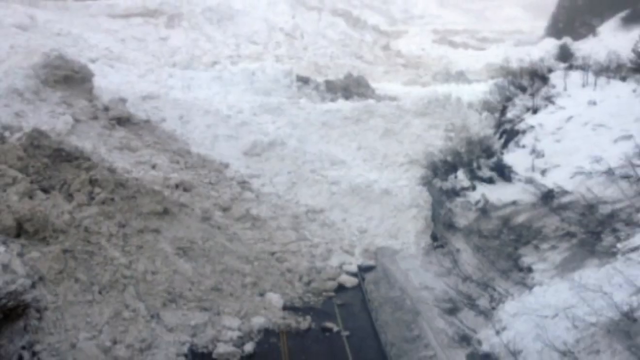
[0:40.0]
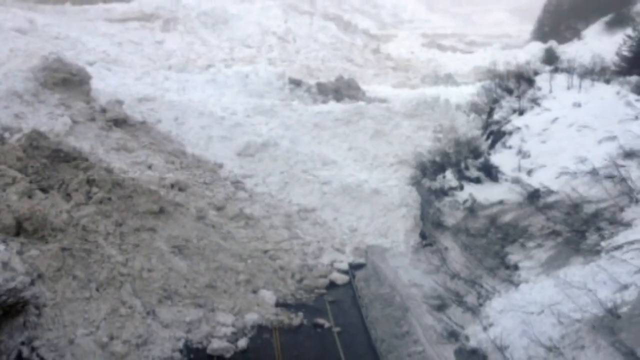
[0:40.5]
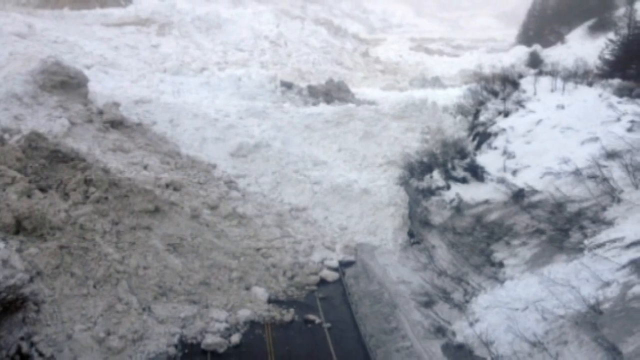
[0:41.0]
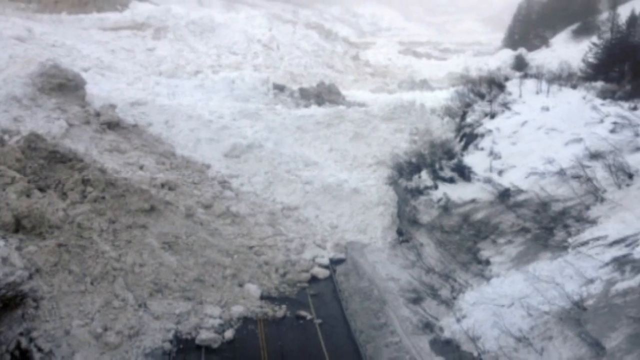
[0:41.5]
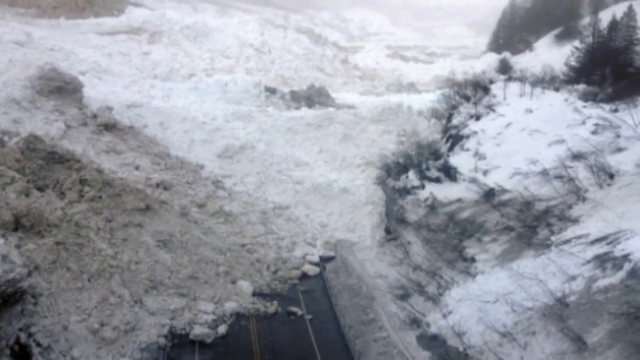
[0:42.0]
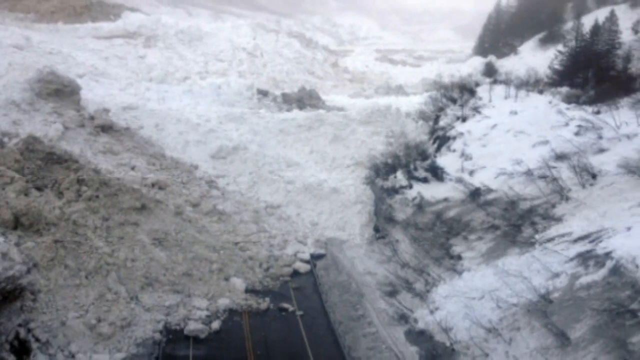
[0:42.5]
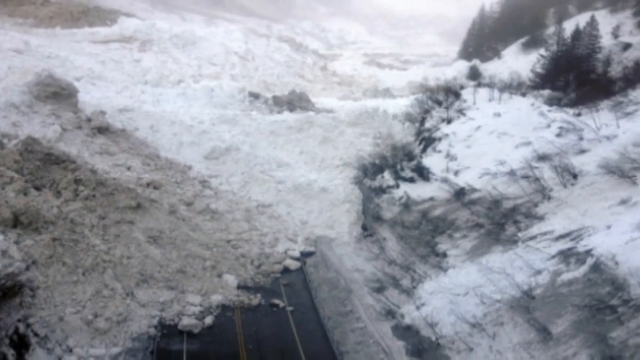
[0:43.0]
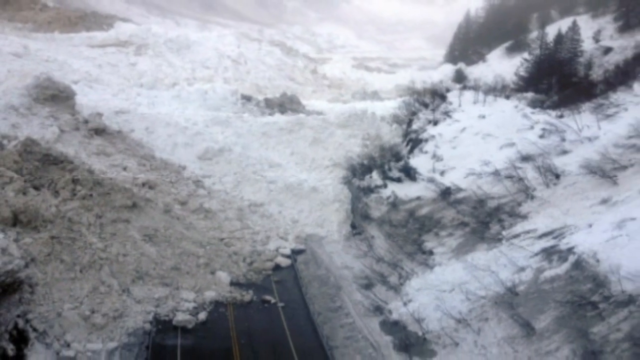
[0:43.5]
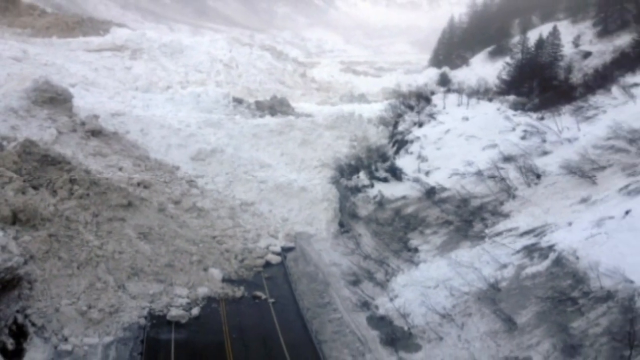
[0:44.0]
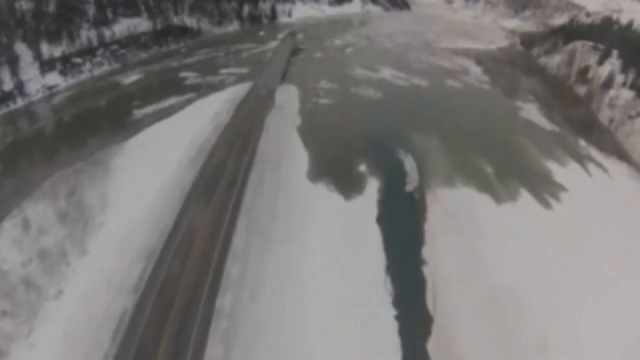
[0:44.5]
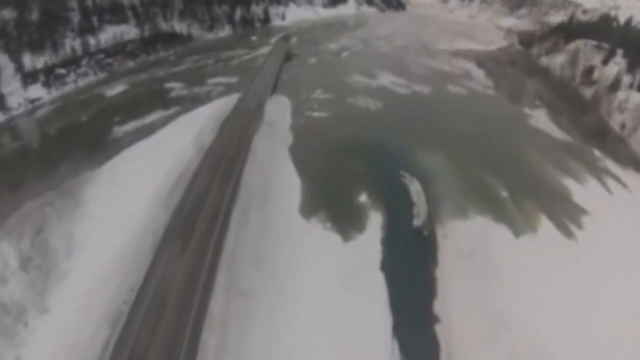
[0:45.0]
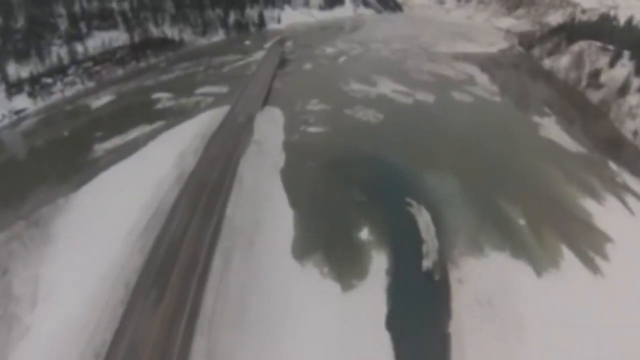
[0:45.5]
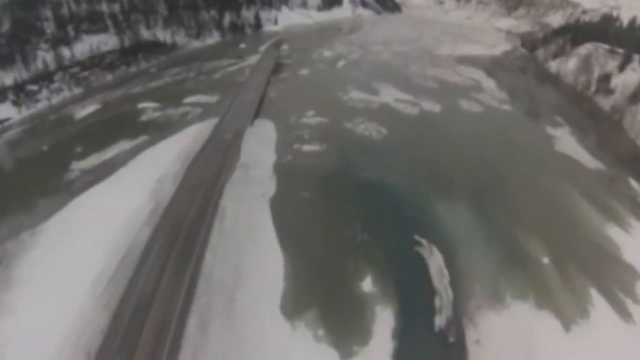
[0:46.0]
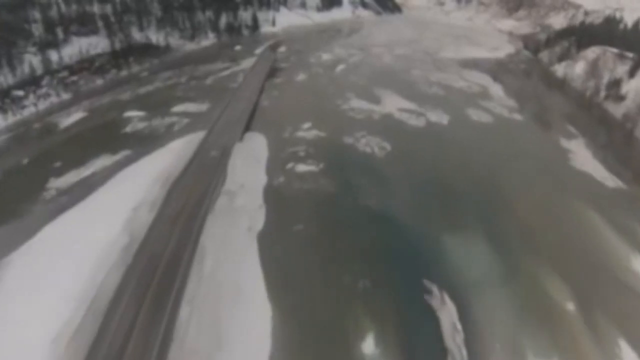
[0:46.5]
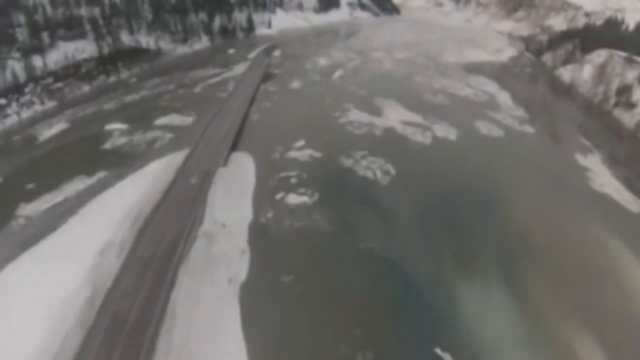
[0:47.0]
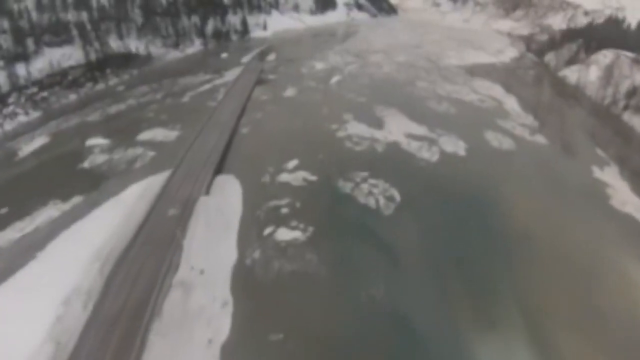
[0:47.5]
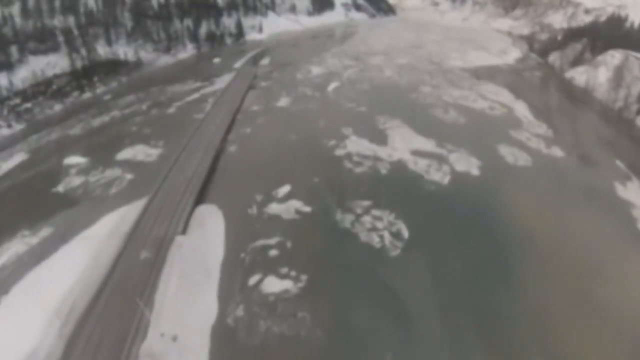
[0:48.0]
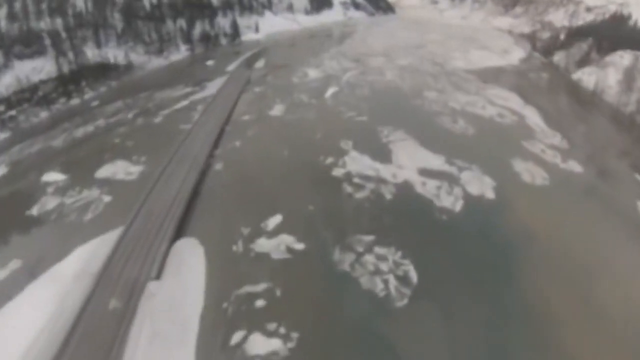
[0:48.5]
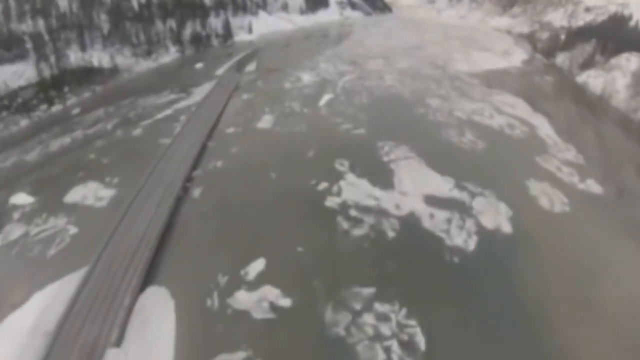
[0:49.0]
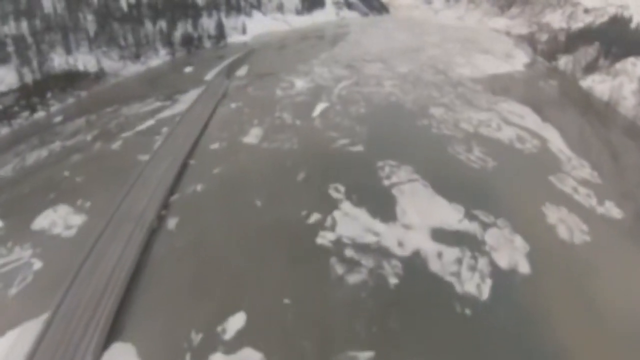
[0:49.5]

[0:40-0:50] The camera moves to a level ground surface with little snow covering the area, spread apart in tiny portions. It moves slowly to capture smaller, shorter trees covered slightly with snow, then moves to a path on the ground with little to no snow, a place mostly devoid of snow. A long brown log with a flat, smooth surface lies across the pathway on the ground.